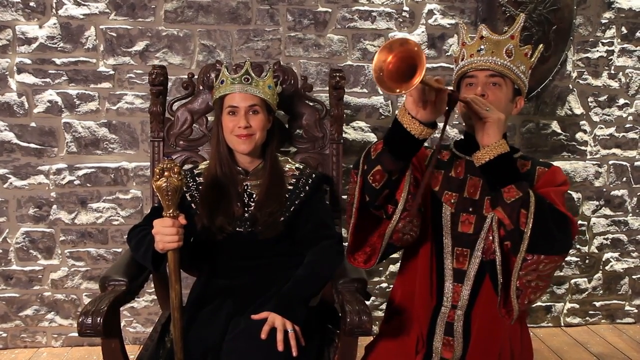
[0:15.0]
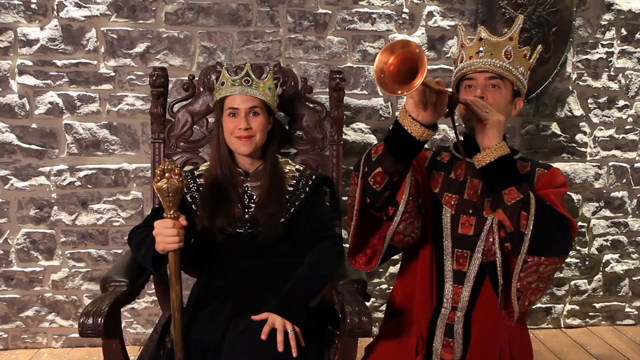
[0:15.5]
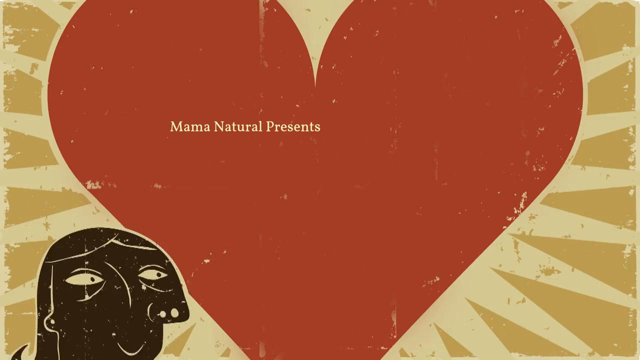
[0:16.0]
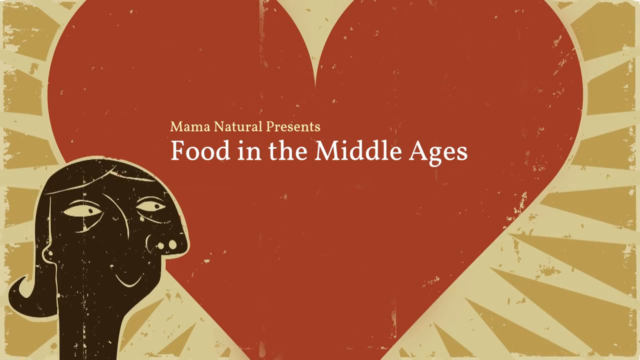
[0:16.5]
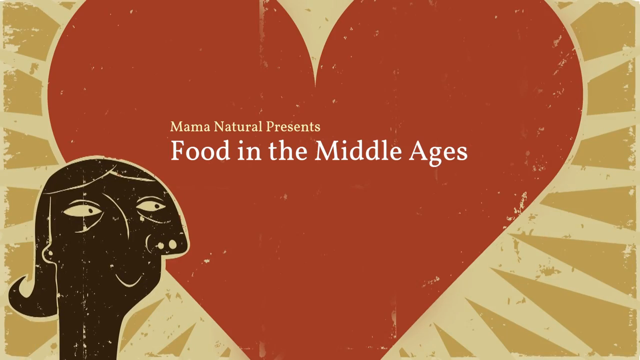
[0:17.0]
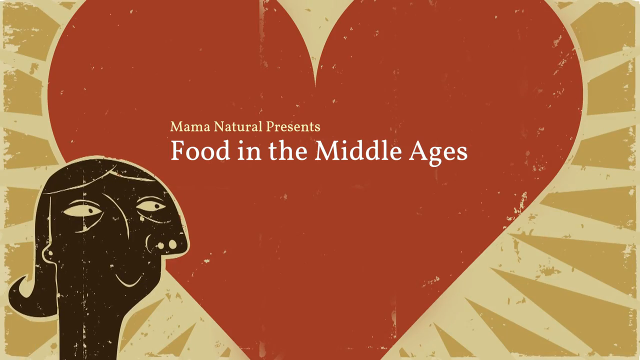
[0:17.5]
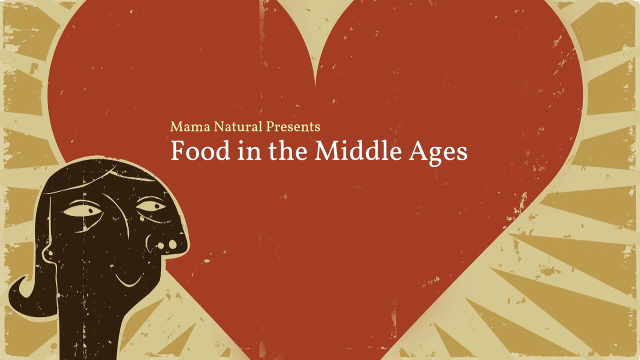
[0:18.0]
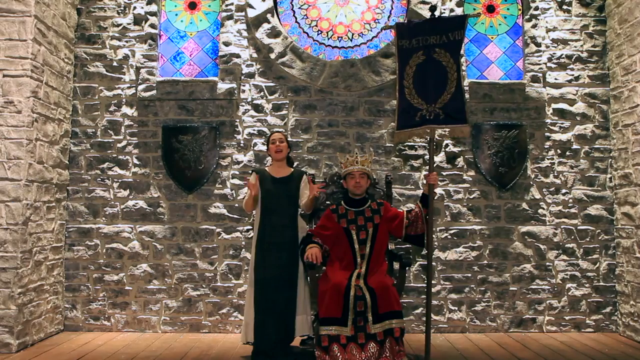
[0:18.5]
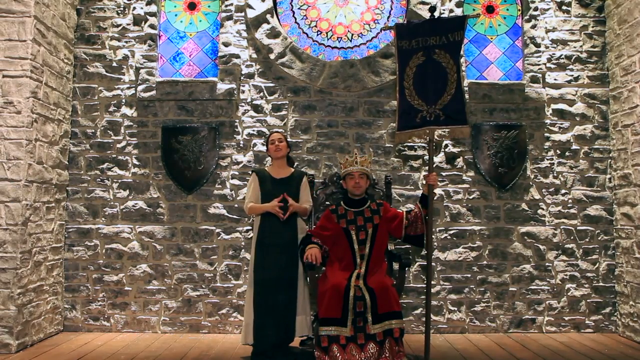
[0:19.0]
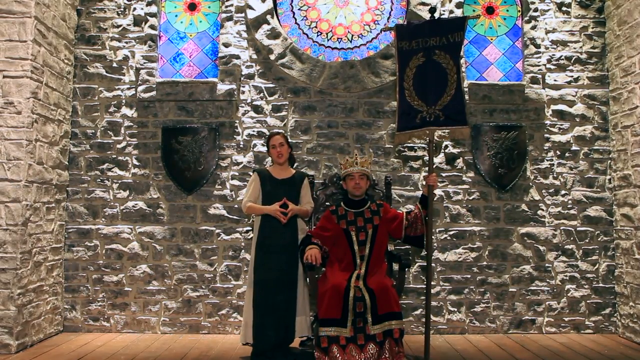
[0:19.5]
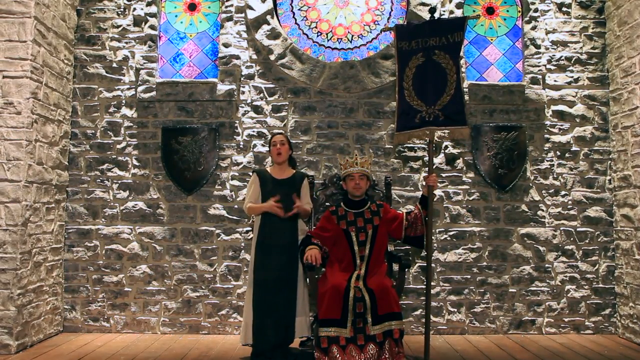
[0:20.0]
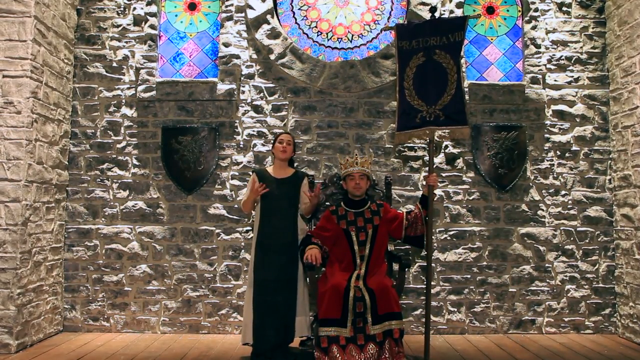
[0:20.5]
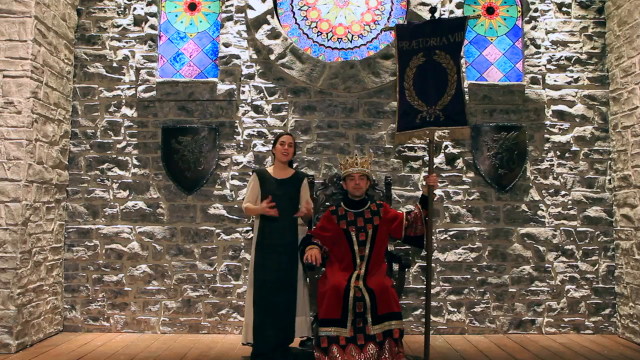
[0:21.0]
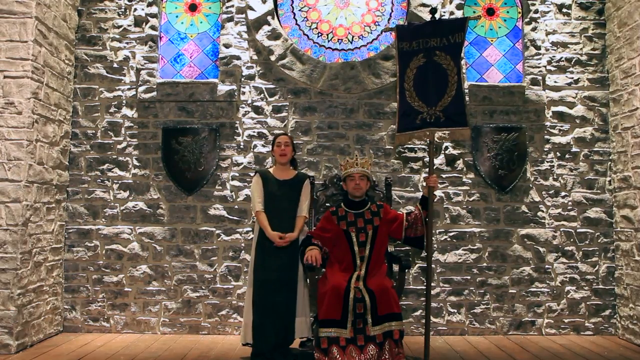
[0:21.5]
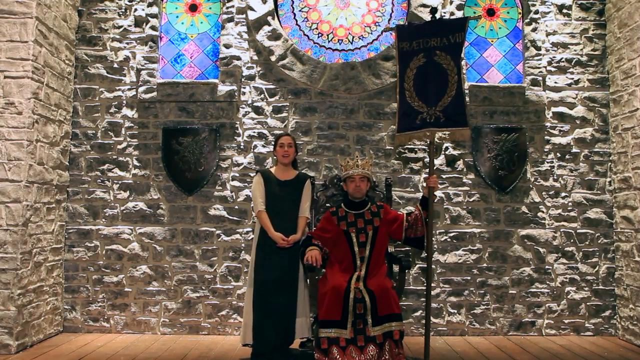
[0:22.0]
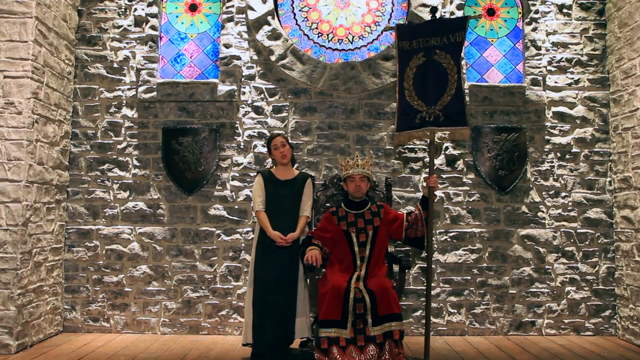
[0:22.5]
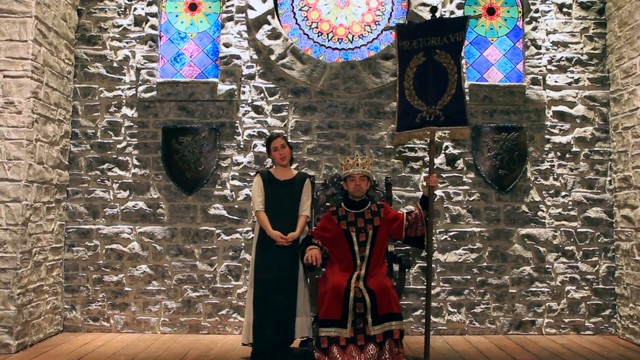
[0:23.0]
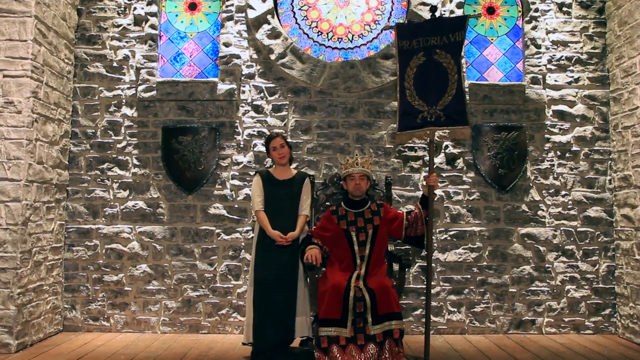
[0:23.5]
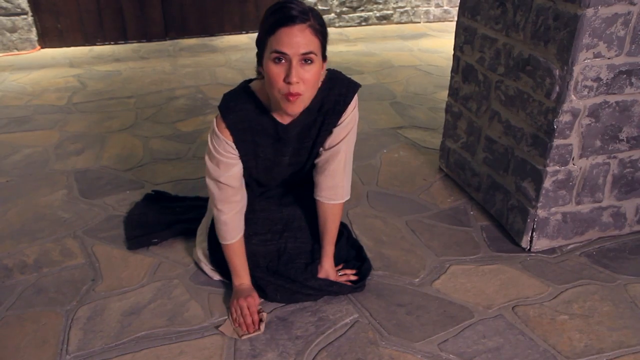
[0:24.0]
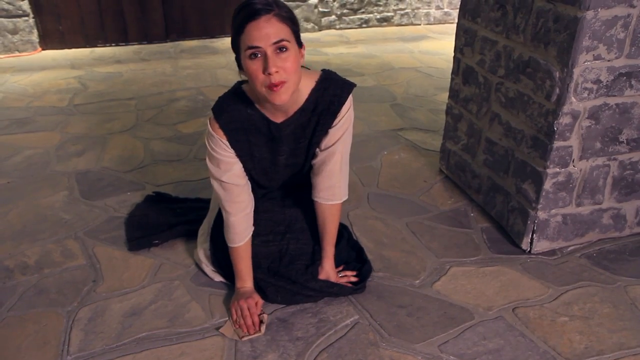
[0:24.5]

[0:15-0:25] The woman sits on the throne with the man blowing a trumpet beside her, then the video immediately transitions to a slide showing a red heart on a golden background with the text "mama natural presents food in the Middle Ages", and a drawing of a person comes up from the left corner. Next, the woman stands in what looks like a castle-type room, no longer dressed as a king but wearing a medieval dress, her hair in a bun at the back of her head. The man is now sitting on what looks to be the same throne, holding a flag: a square flag on a long cross stick with some kind of circular design on it. Intricate stained glass windows are at the top of the room, and two shields are under a couple of the windows as a design on the stone castle wall. She talks while he holds the flag and nods. Then she is alone in the same castle-type area, scrubbing a stone floor and looking up at the camera as she talks.